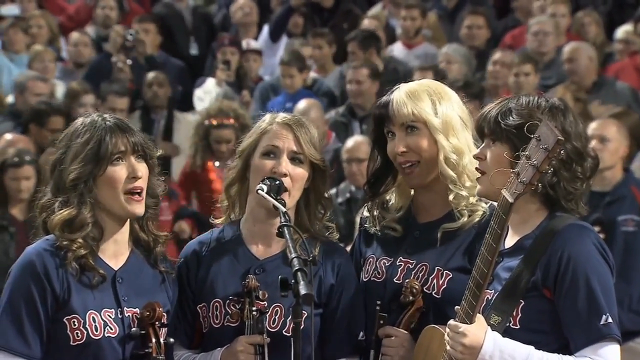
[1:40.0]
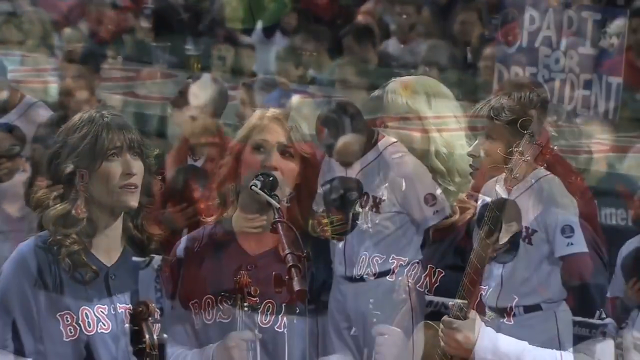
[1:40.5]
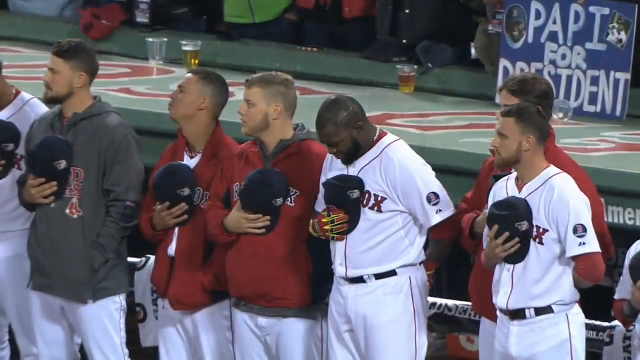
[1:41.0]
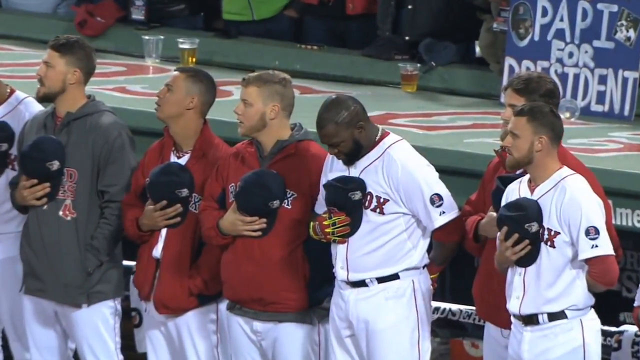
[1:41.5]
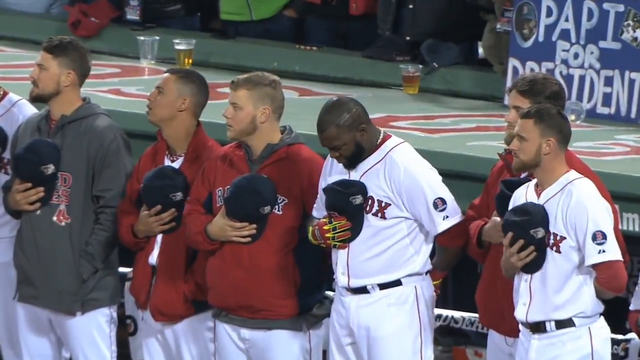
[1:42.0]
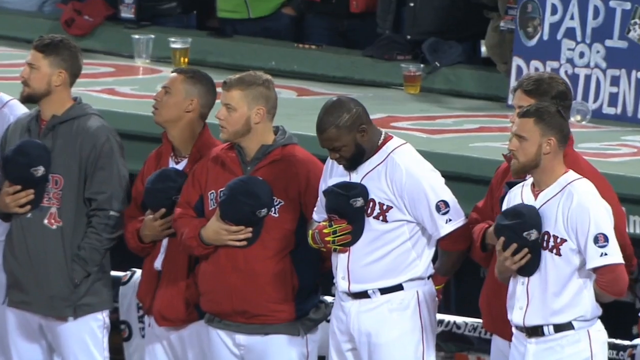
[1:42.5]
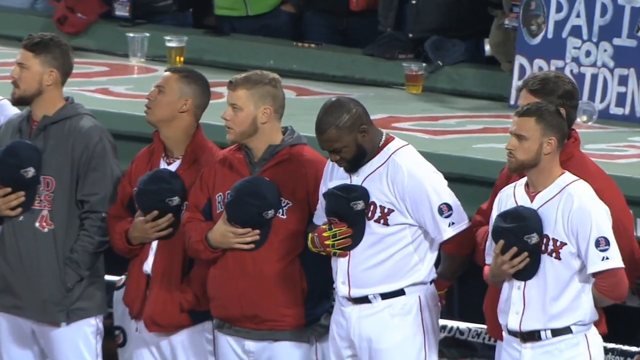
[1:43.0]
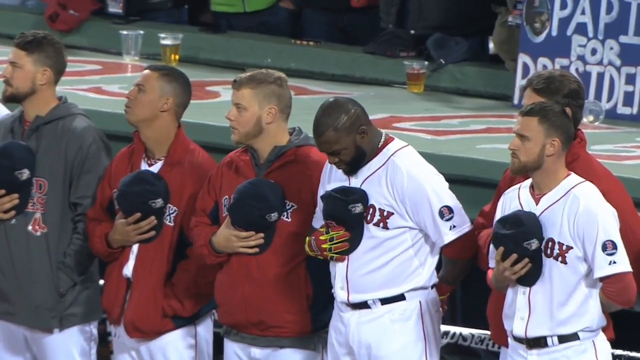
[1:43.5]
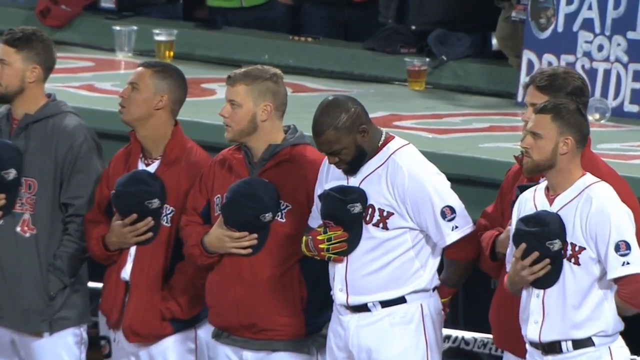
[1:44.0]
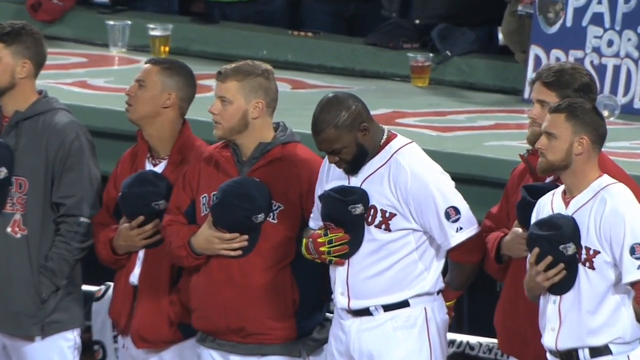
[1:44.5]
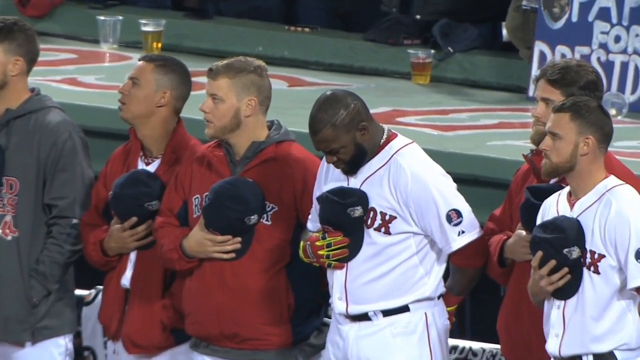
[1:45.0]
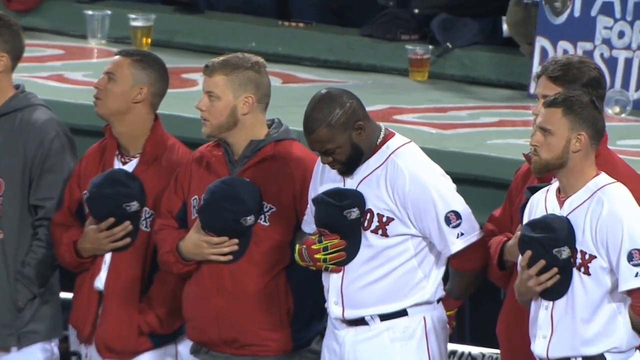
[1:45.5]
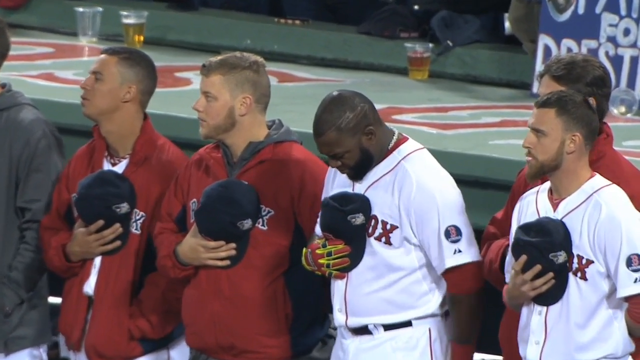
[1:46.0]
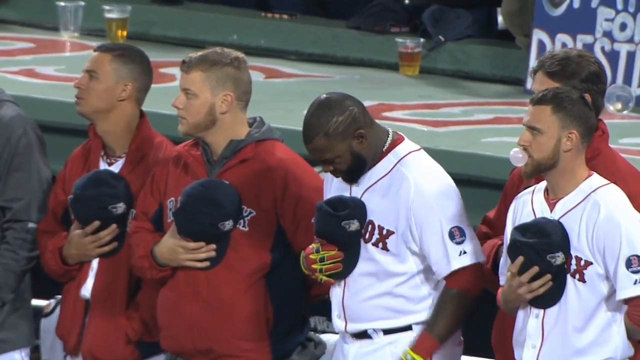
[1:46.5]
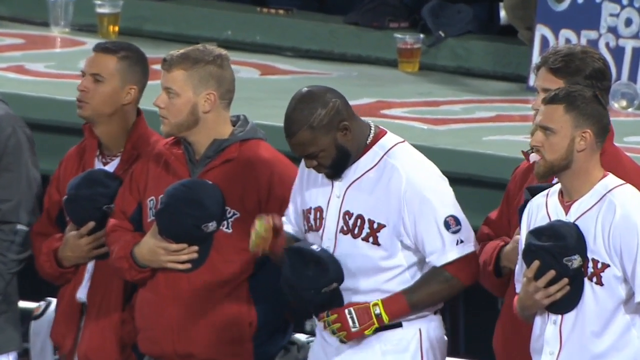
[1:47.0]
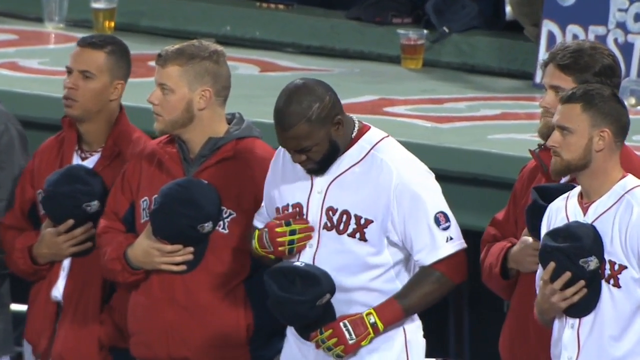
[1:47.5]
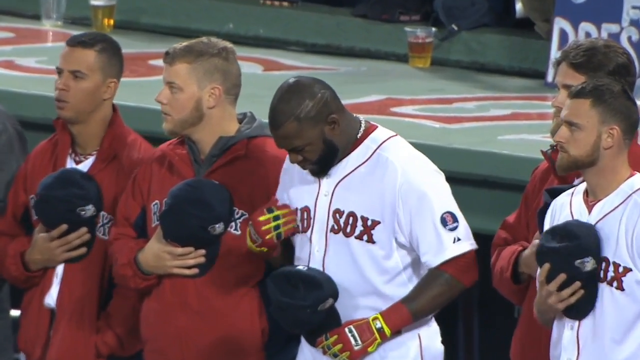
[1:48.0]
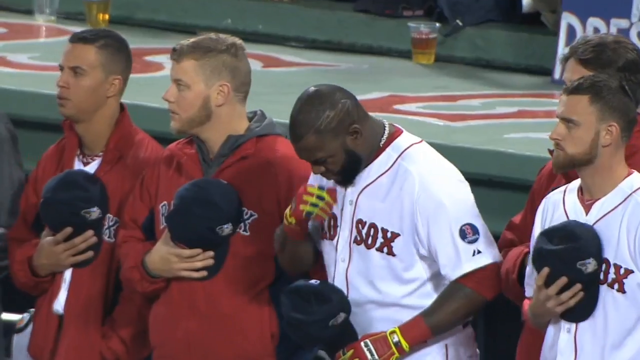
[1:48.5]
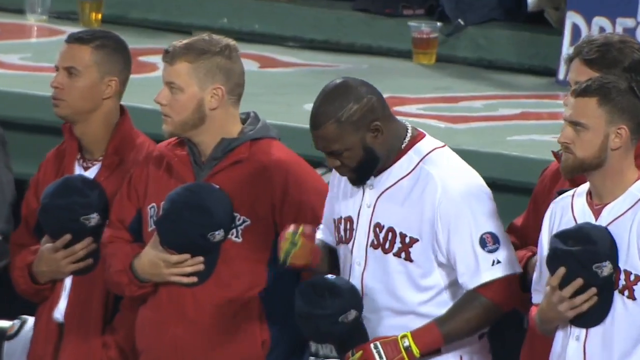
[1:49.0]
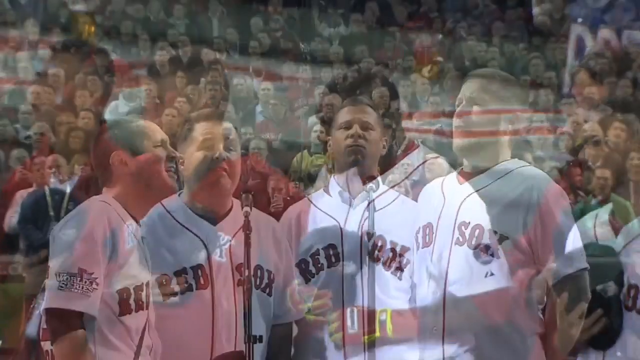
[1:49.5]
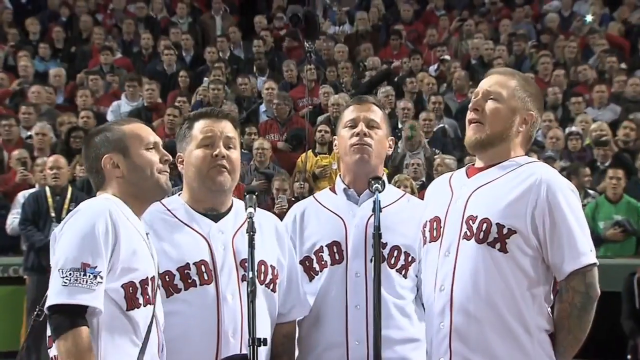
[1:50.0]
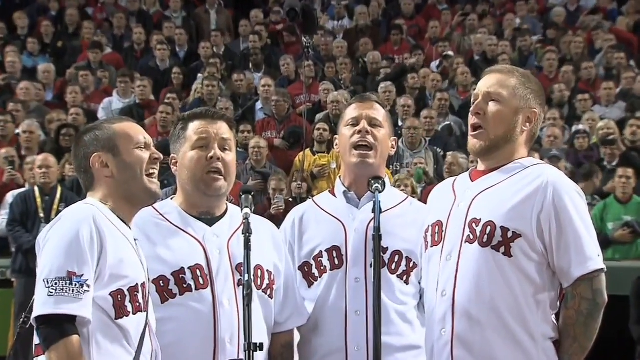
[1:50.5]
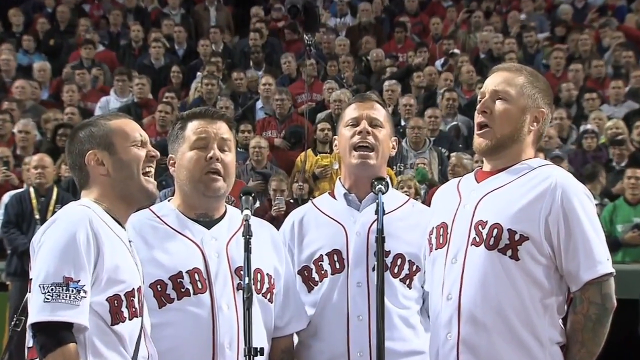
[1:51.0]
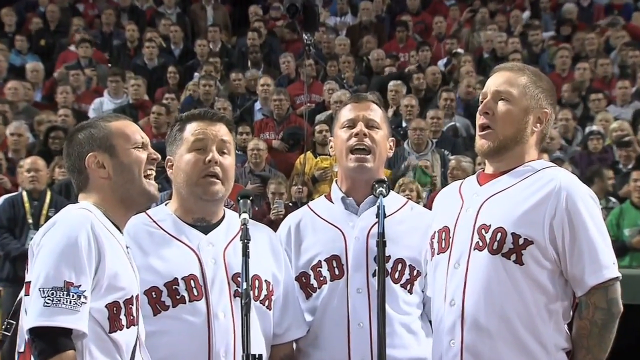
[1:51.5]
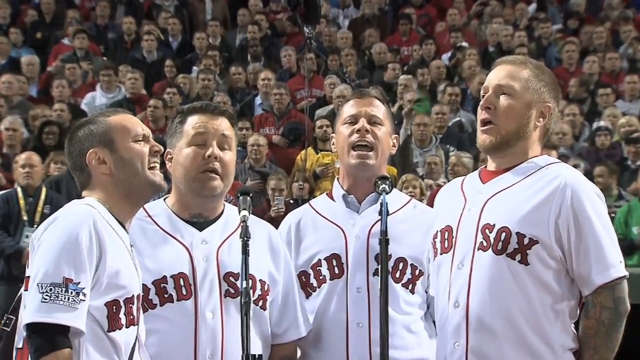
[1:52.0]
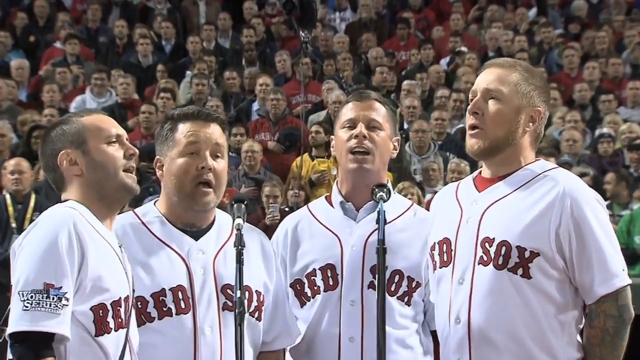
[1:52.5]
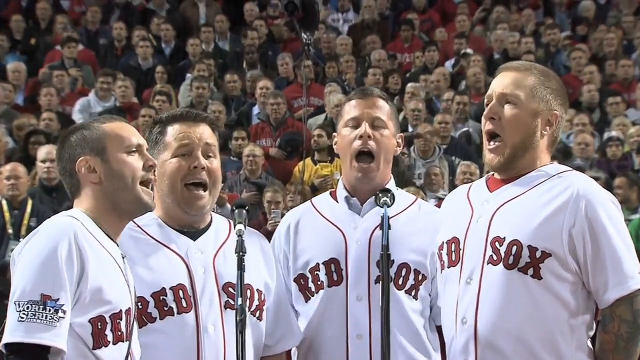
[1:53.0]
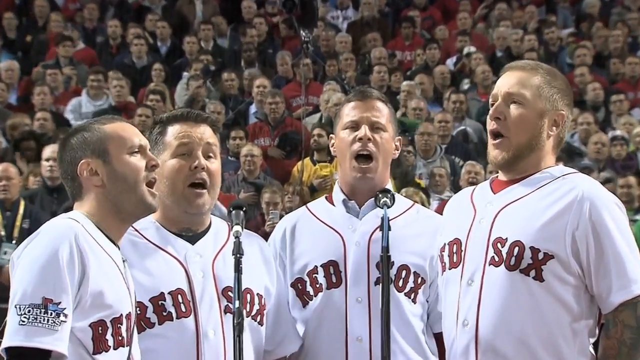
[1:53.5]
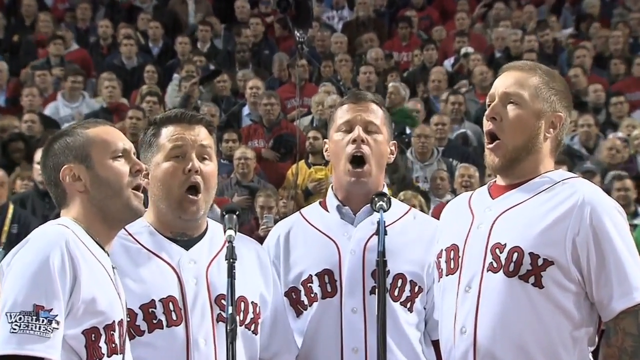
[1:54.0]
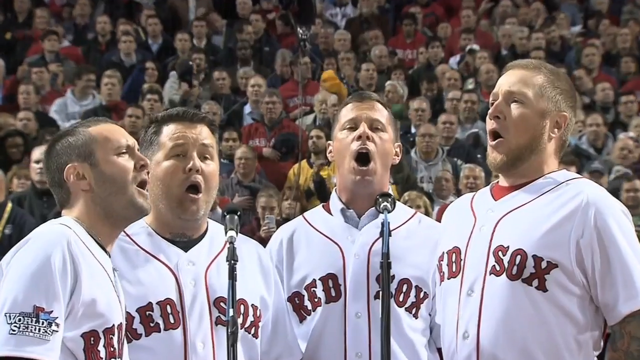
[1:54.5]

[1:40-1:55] A very short shot of the four women transitions to a shot of six players that zooms in to five, standing during the national anthem. Some have their arms behind their backs, while others hold their hats over their hearts; they wear white Red Sox jerseys with "Red Sox" in red. The camera singles out one man with his head bowed, who makes the sign of the cross wearing red and yellow gloves, apparently batting gloves, and points up to the sky. The shot then switches to the four men still singing; they appear to be at the end of the anthem, seemingly mouthing "of the free" and "the home."